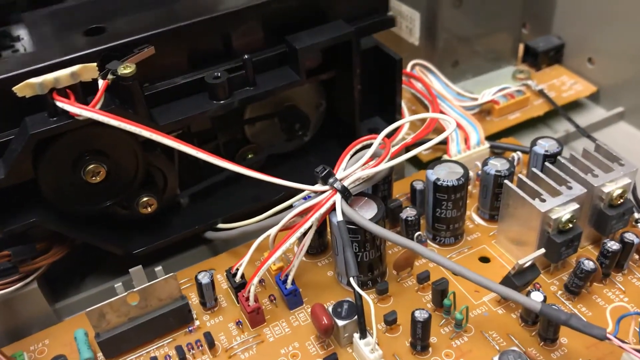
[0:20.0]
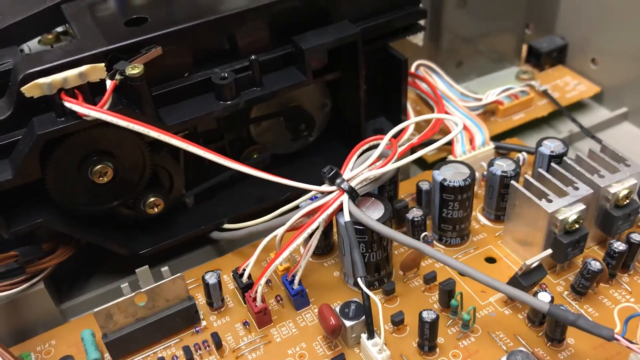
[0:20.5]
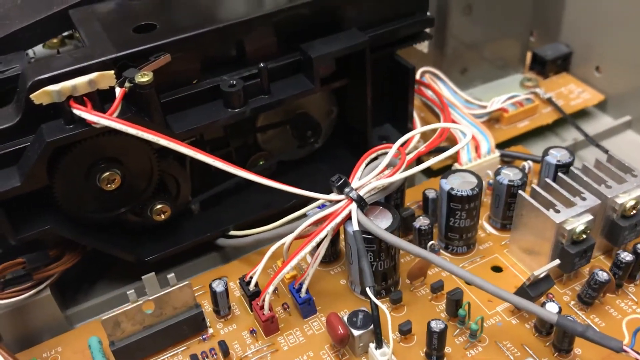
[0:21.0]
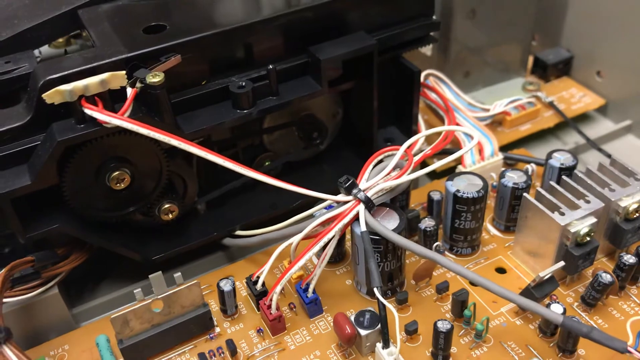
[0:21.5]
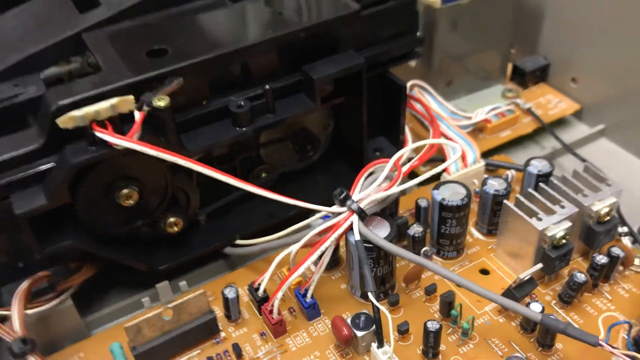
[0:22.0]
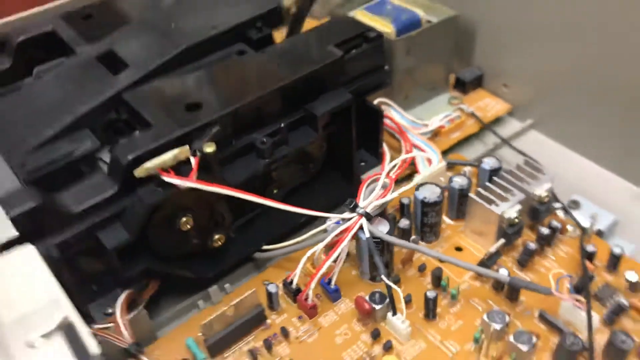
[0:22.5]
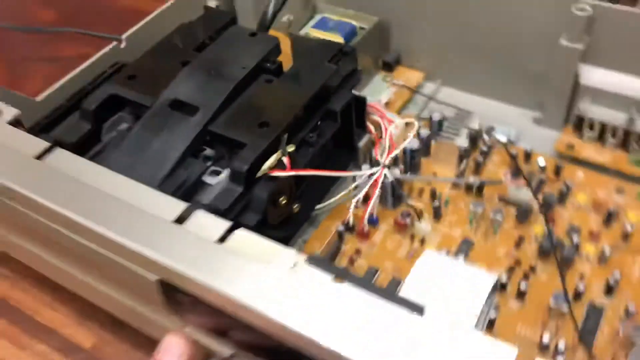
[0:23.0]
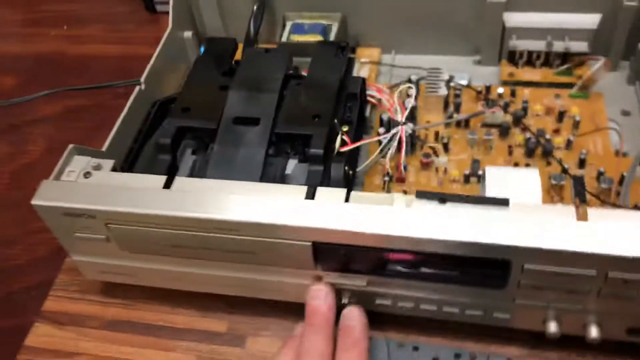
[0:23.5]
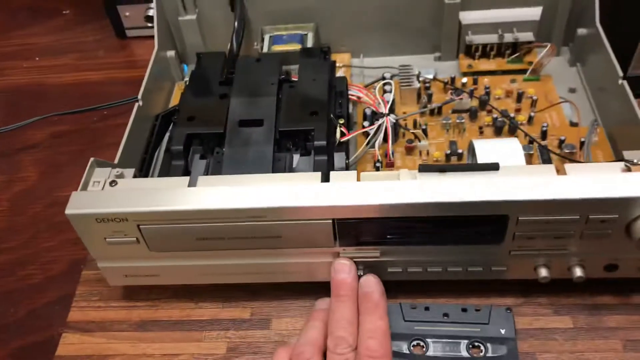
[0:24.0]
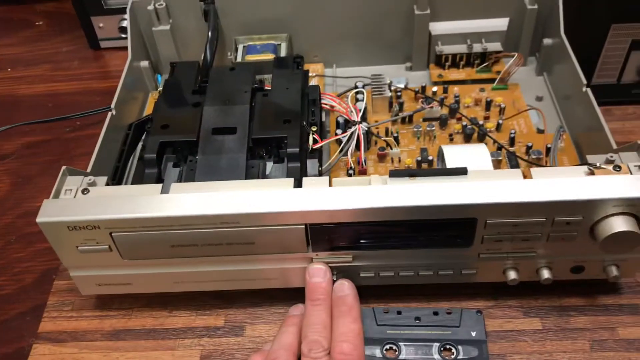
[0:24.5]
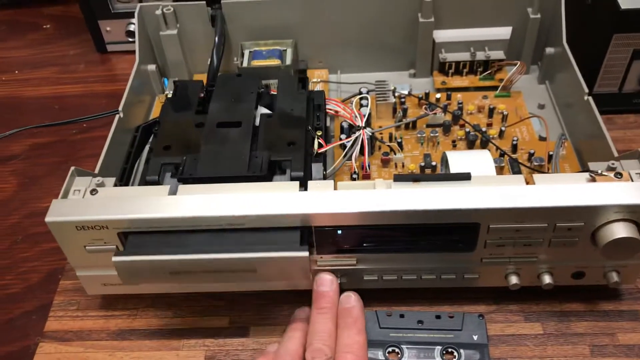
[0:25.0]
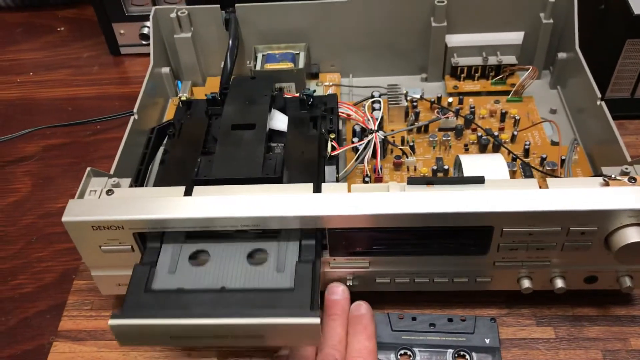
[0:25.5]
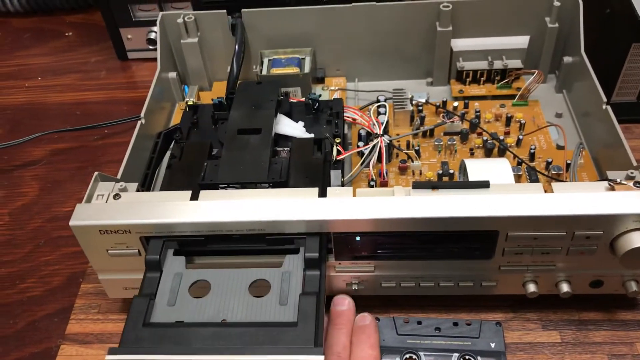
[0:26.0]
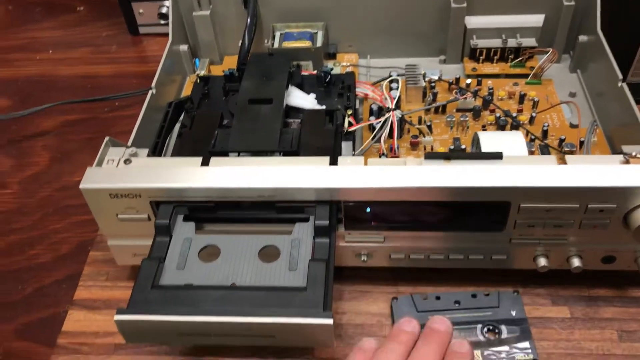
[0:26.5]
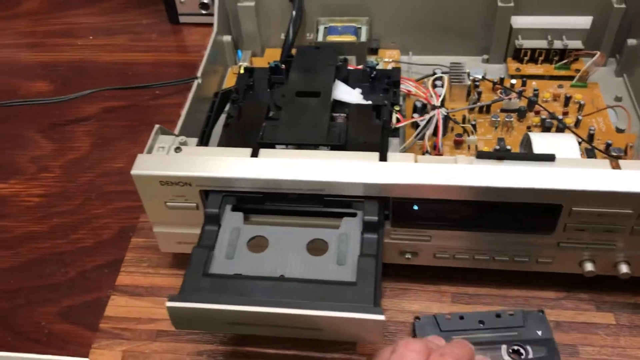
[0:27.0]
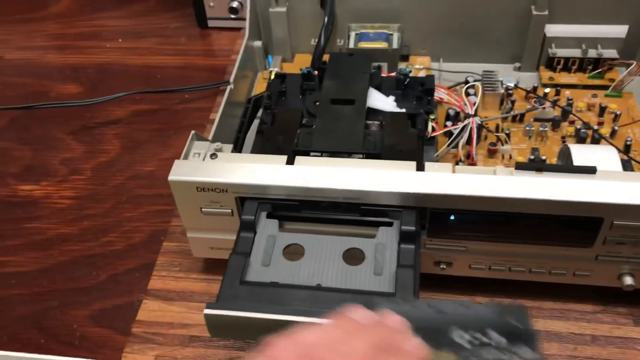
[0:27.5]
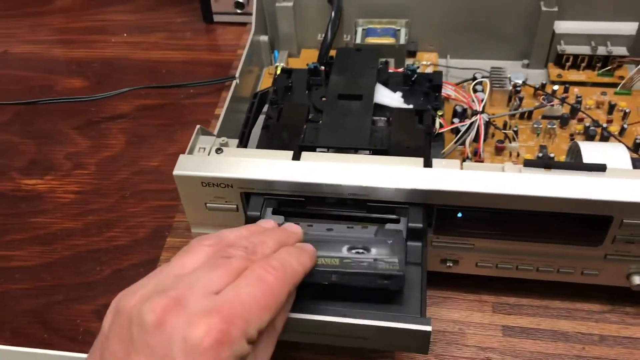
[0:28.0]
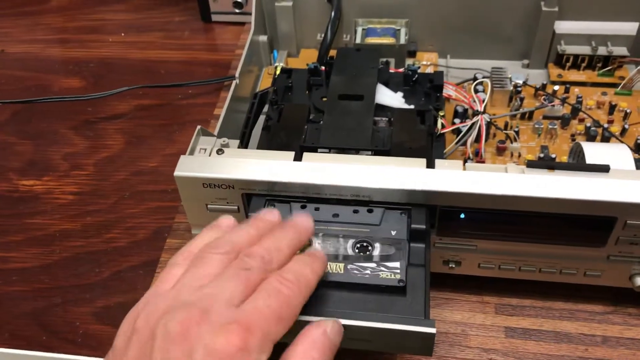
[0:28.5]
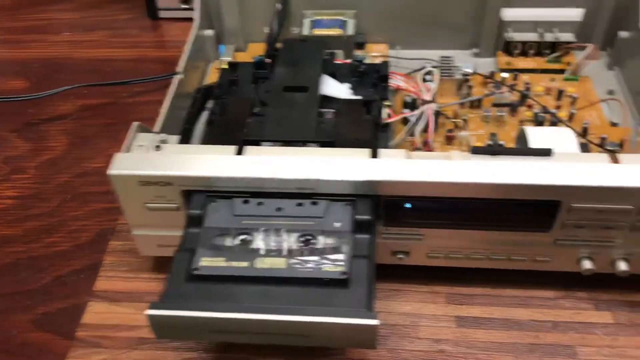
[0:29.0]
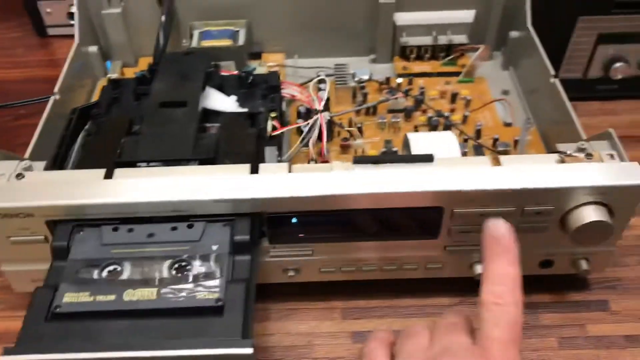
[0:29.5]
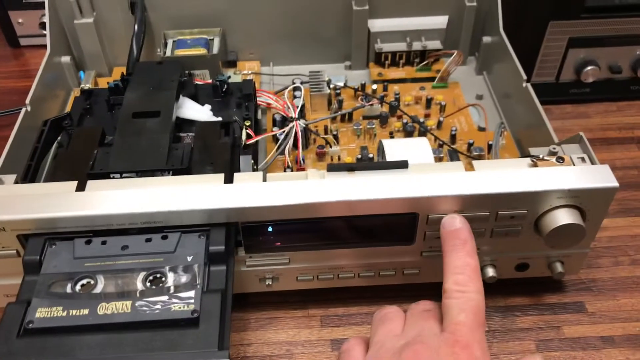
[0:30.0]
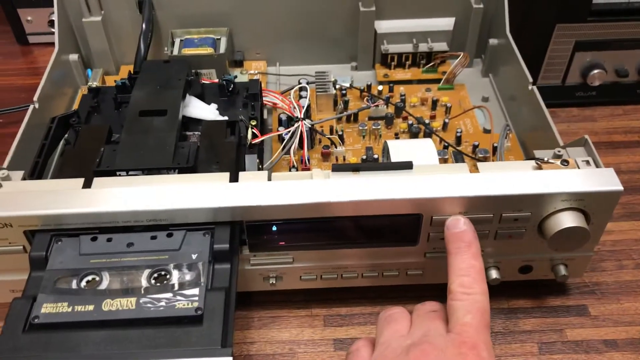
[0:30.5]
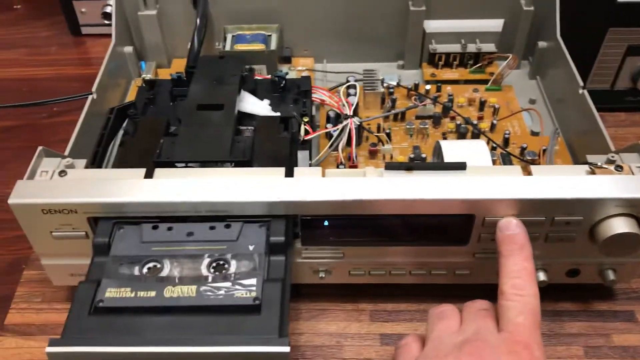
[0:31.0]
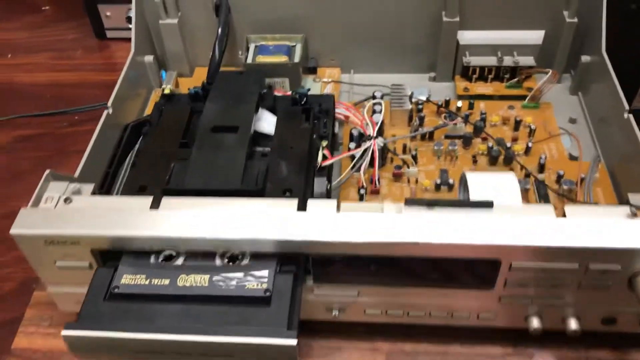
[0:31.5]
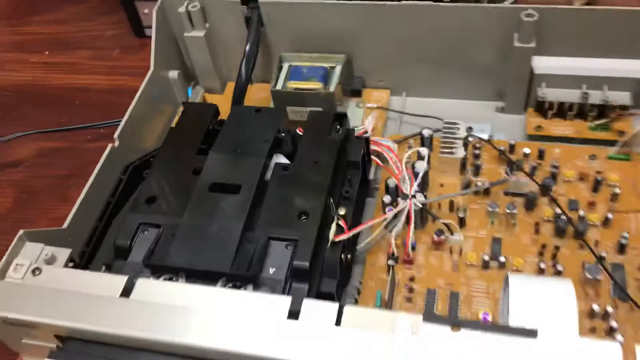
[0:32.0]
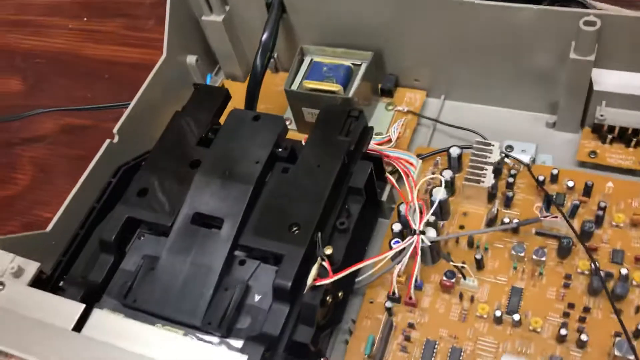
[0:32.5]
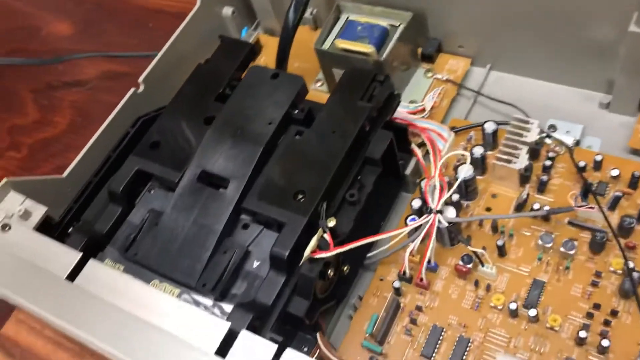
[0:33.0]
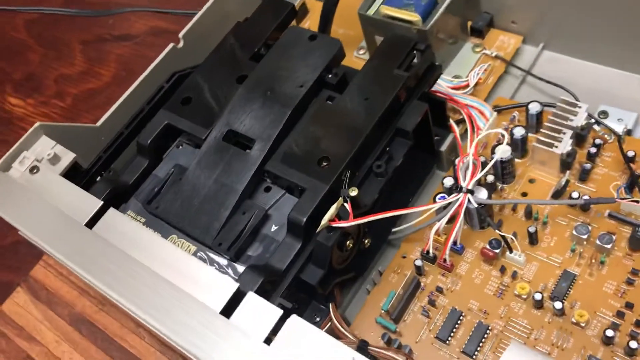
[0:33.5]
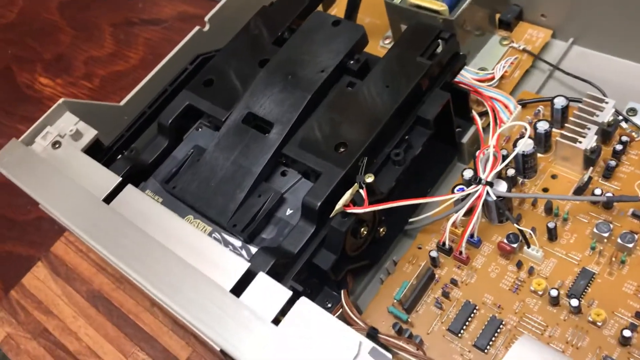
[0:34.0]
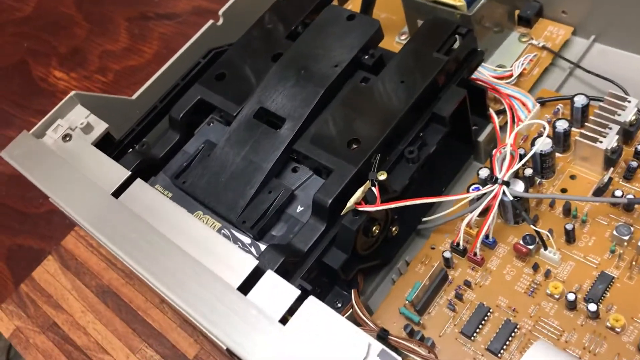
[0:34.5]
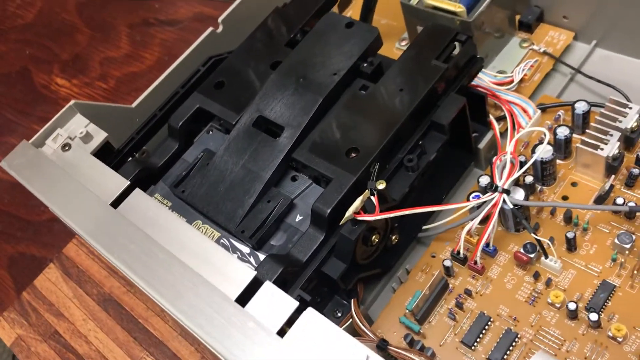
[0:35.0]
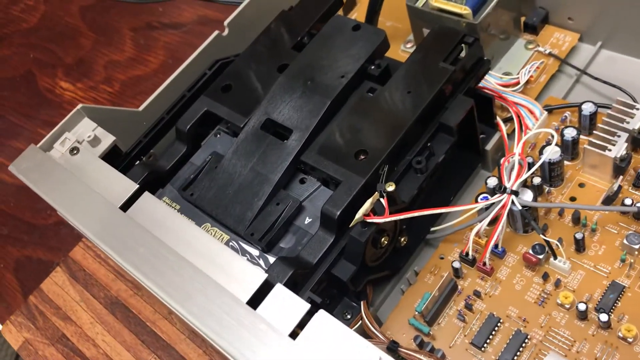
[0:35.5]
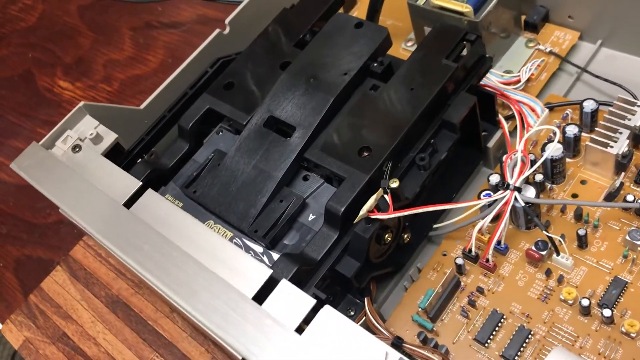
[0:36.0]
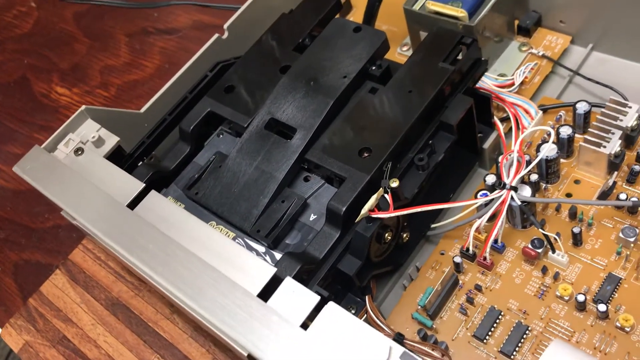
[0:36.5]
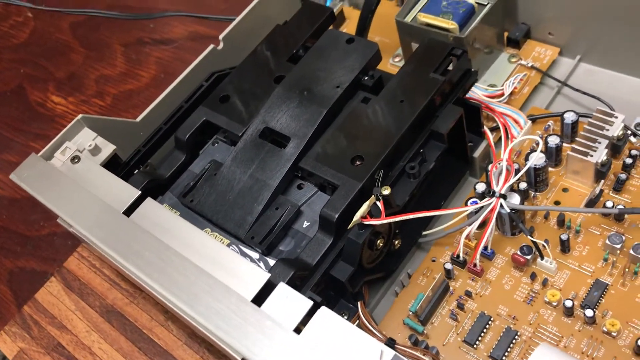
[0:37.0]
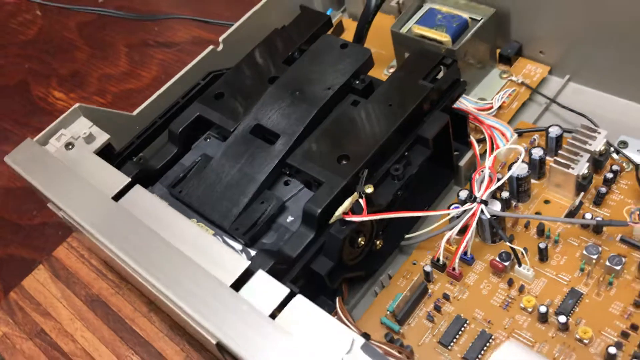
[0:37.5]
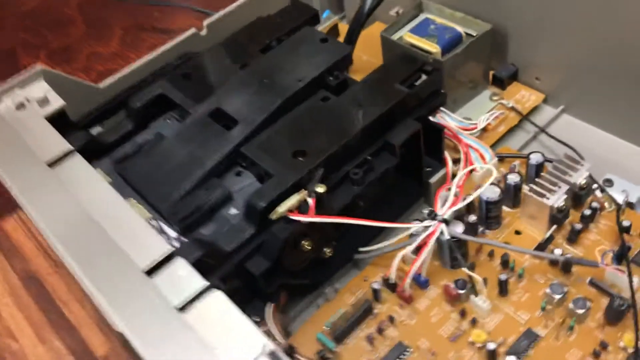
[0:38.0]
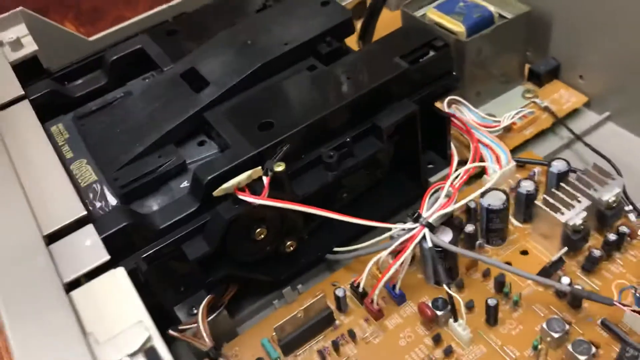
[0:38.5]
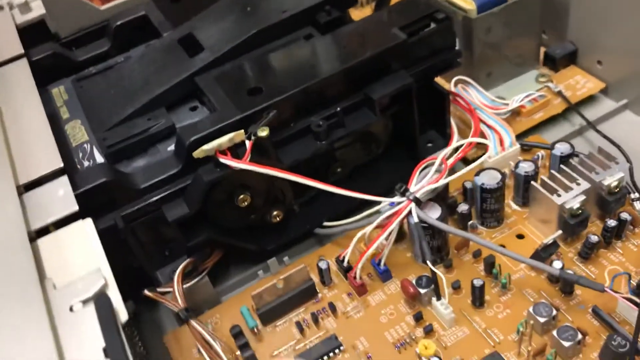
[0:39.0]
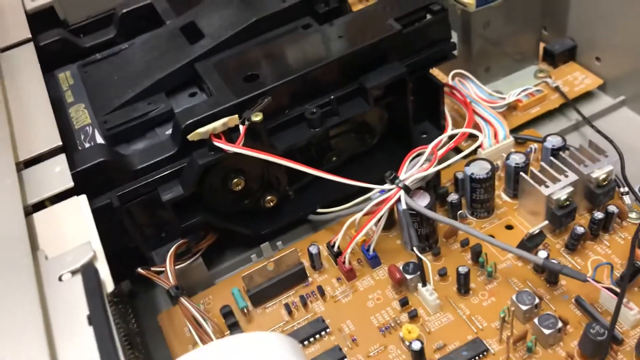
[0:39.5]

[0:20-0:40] The equipment now appears to be an audio tape recorder rather than a video recorder. Someone puts a tape in, and it looks like an audio tape rather than a video tape. The tape goes into the unit, and more units are visible, connected with cable clips and covered in many knobs and dials.